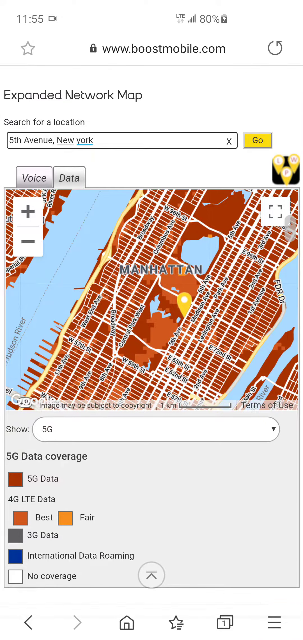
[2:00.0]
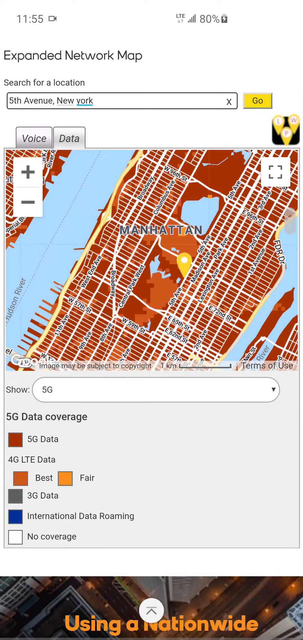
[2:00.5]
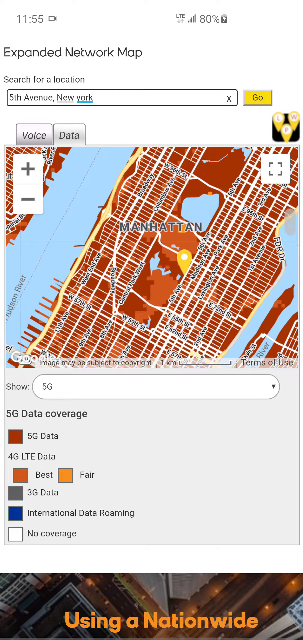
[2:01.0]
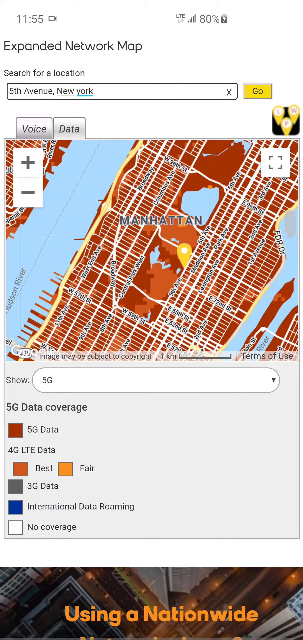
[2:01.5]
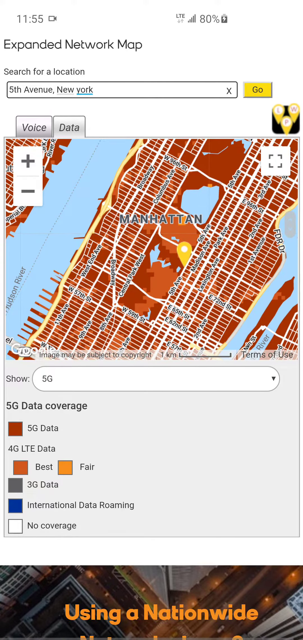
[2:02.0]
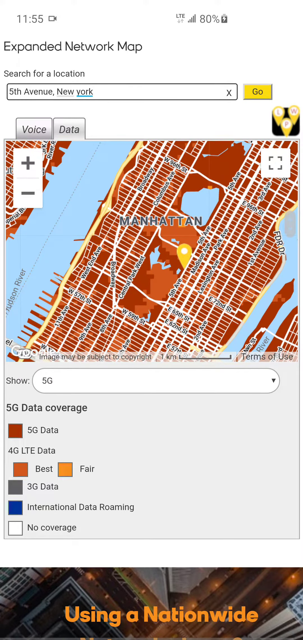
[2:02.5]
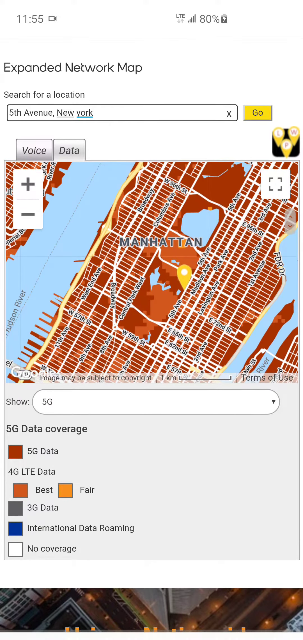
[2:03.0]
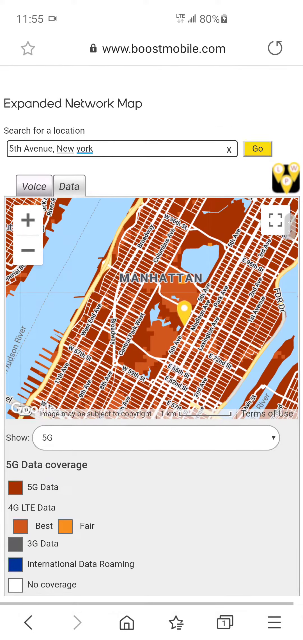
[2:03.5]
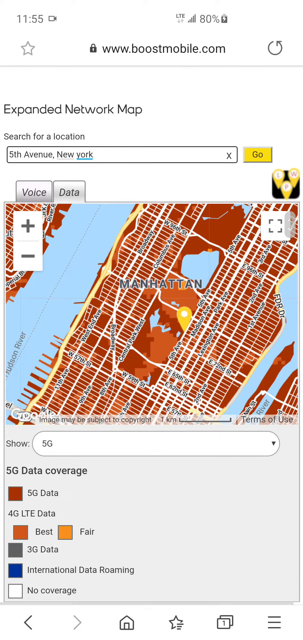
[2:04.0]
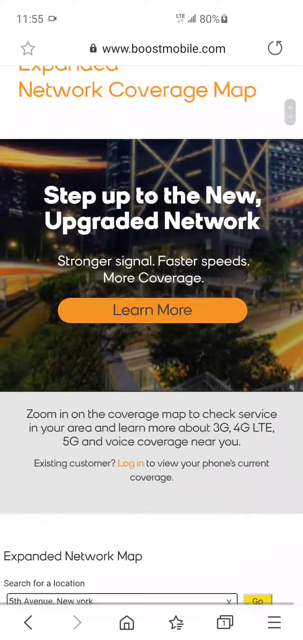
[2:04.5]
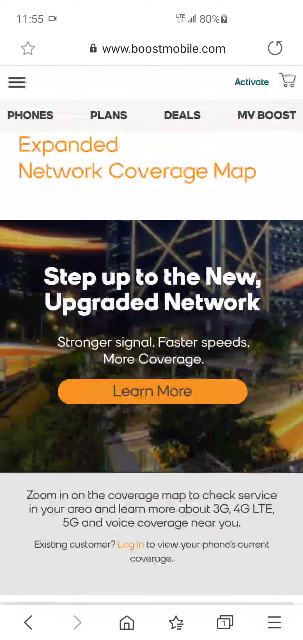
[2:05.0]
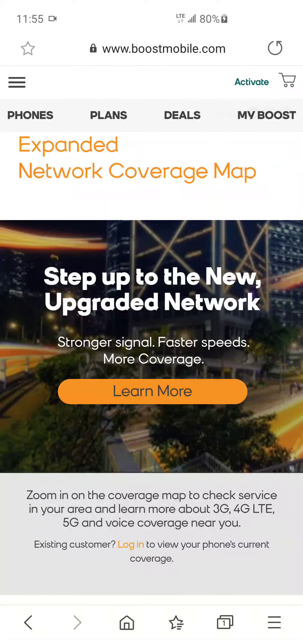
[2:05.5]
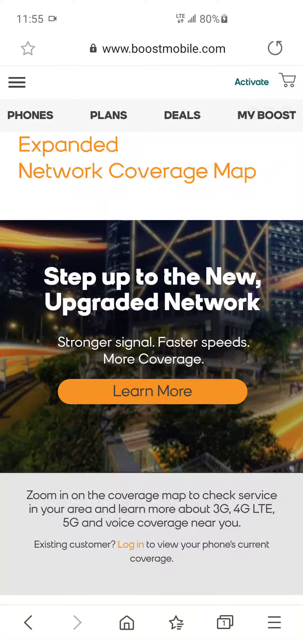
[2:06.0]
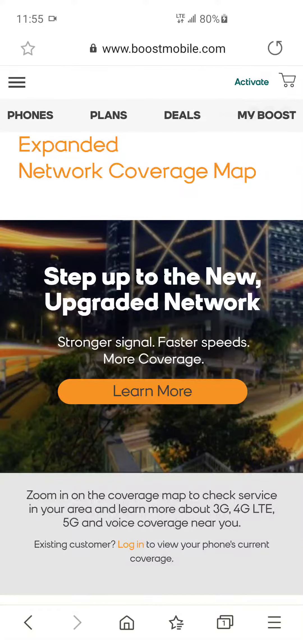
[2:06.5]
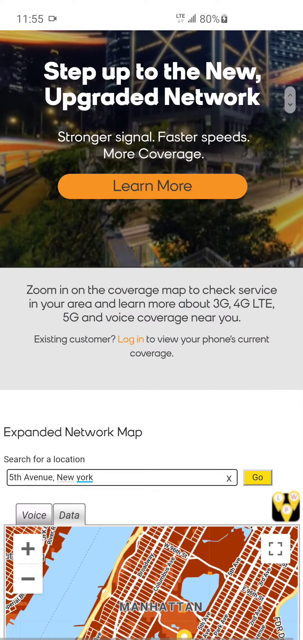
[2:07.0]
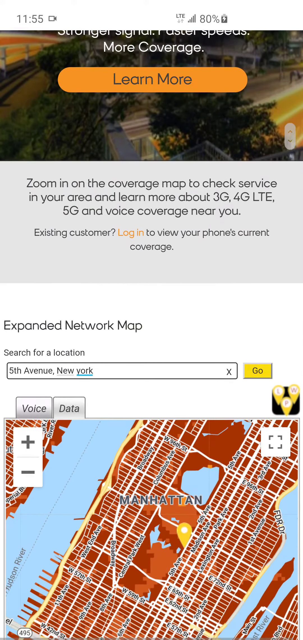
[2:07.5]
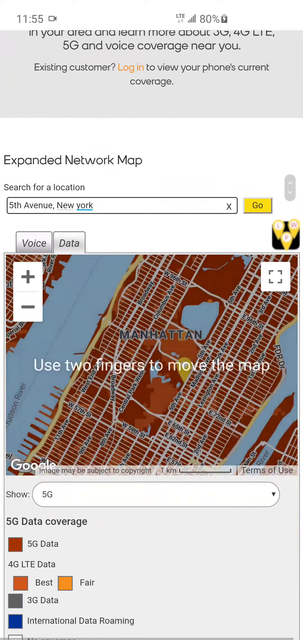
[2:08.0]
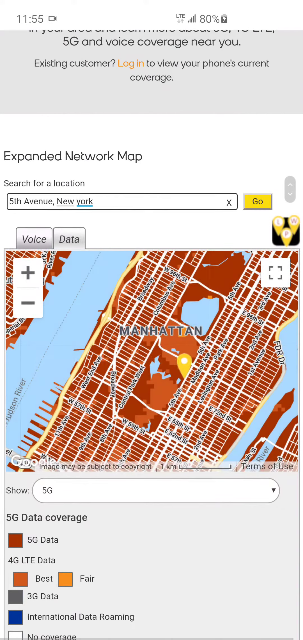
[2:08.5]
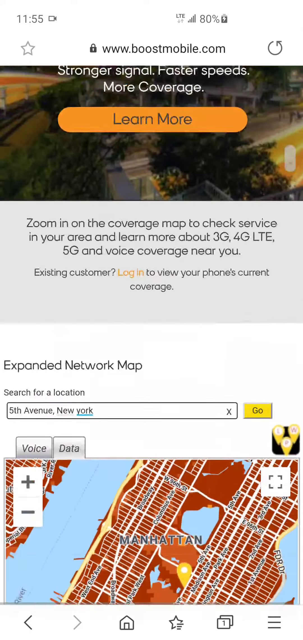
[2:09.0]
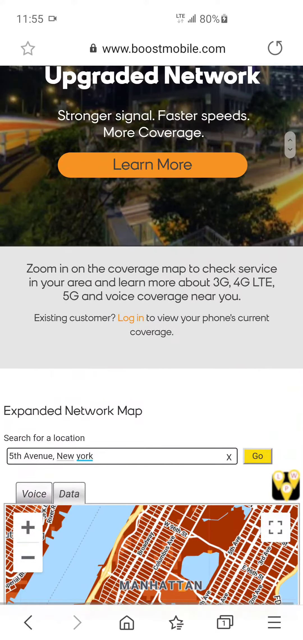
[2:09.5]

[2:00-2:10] The user appears to still be taking a close look at the map of Manhattan after entering the address in the network map on the BoostMobile.com mobile website. 5G is typed in the search, and below it are options for 5G, 4G, LTE, 3G and international data roaming; the coverage options appear to be color-coded. After looking at the map, the person scrolls back up to the Learn More section of the website.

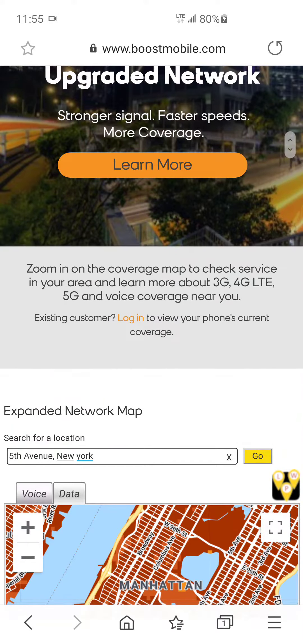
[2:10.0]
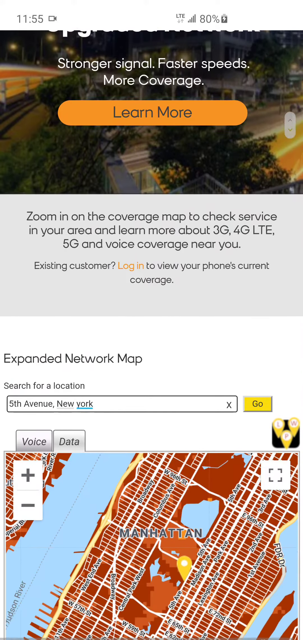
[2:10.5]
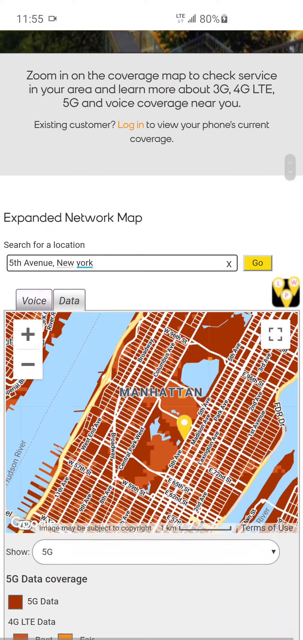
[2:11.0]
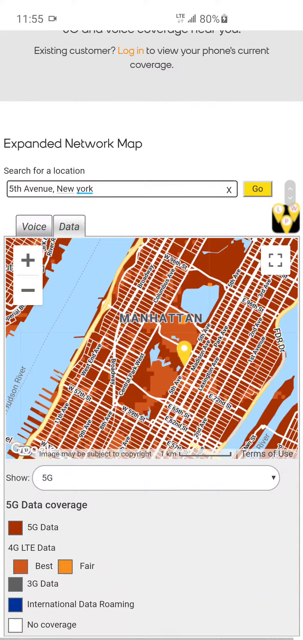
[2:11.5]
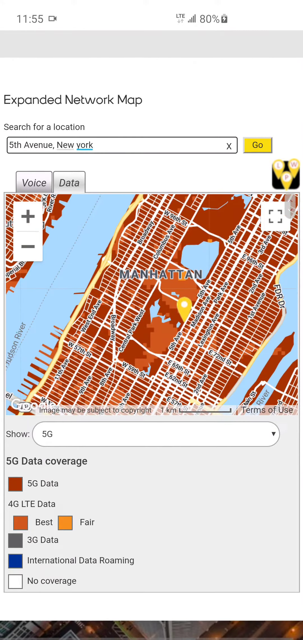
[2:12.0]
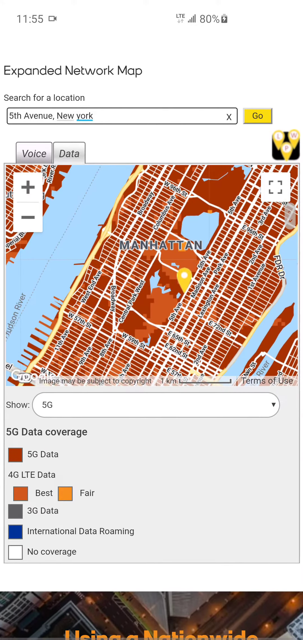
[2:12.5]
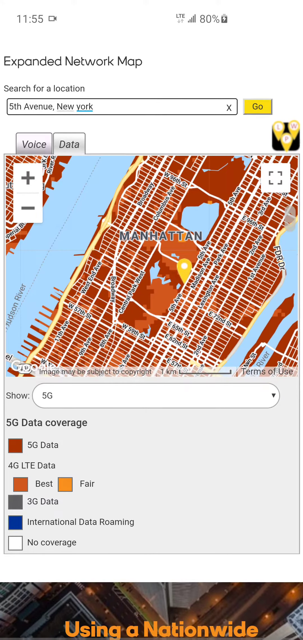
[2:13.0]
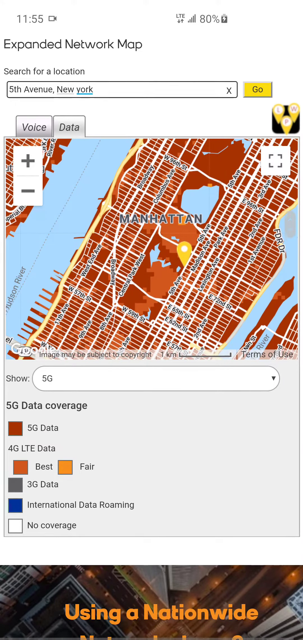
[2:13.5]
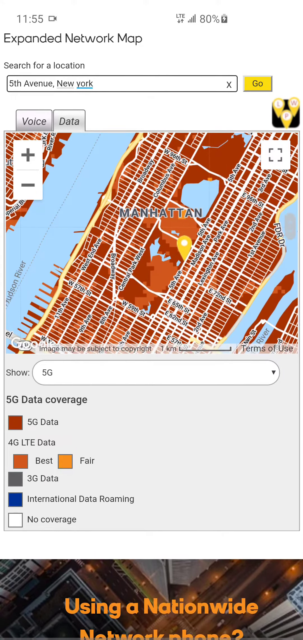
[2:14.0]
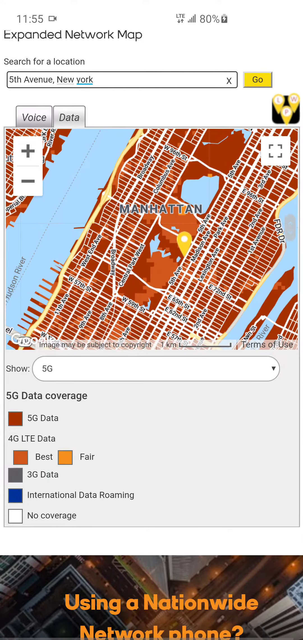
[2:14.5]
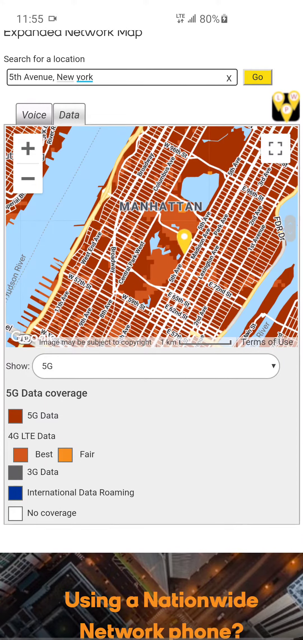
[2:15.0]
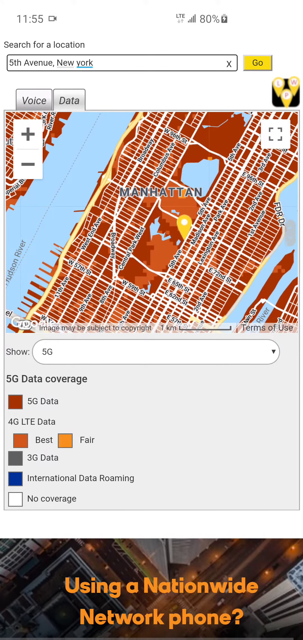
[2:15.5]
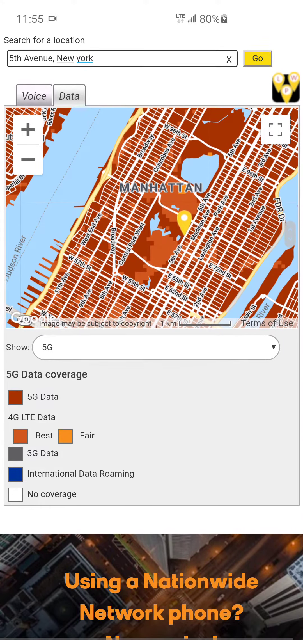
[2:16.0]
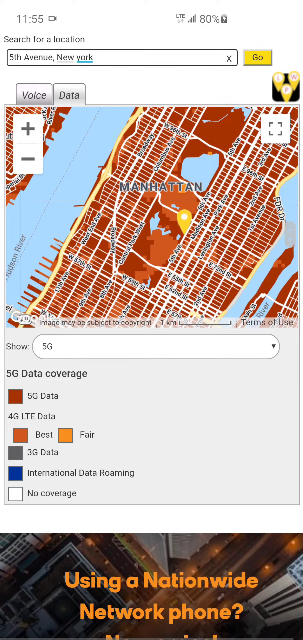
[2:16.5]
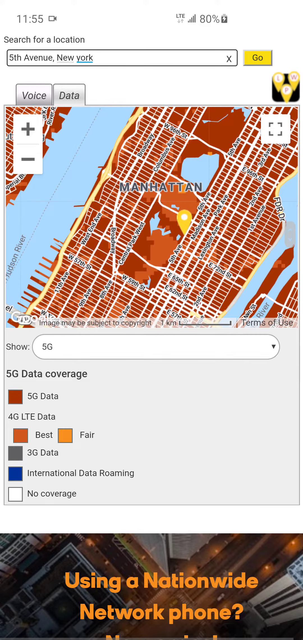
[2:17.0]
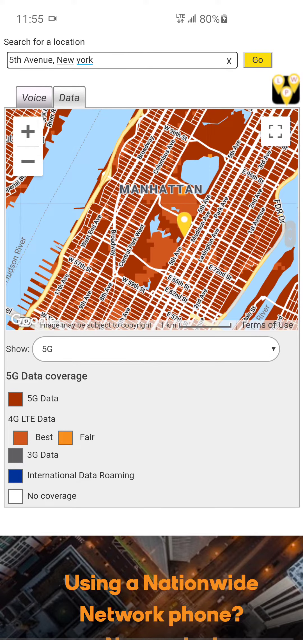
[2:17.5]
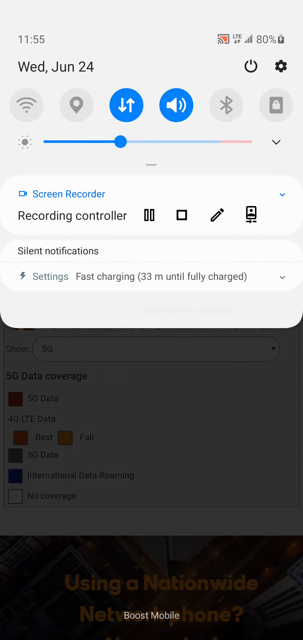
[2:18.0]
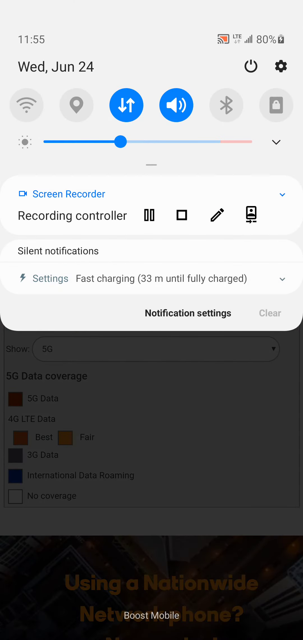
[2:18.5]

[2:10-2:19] The user has scrolled up again to the message about expanded coverage on the web page, and the upgraded network message appears again: an advertisement for a stronger signal, faster speeds and more coverage, with a learn more button, encouraging users to zoom in on the map to check the services available in the area they search for. The user then scrolls back down to the map section and further down, where there appears to be a clickable area for using a nationwide network phone.